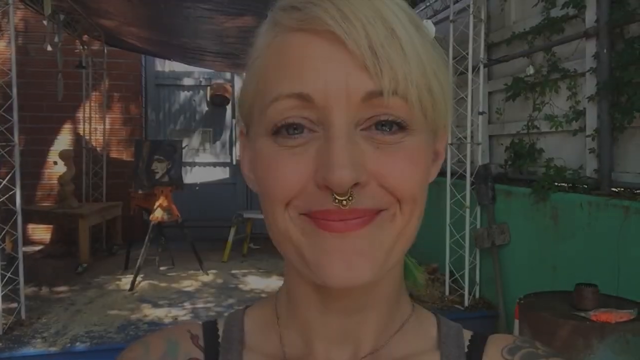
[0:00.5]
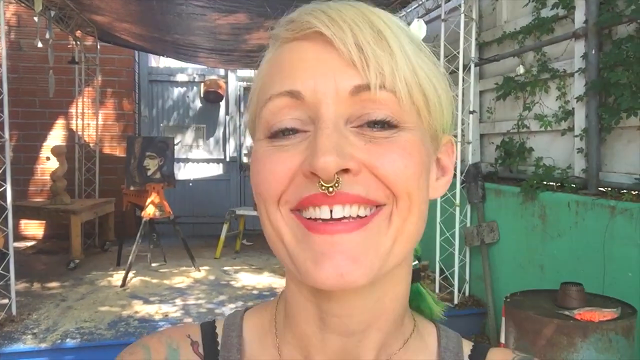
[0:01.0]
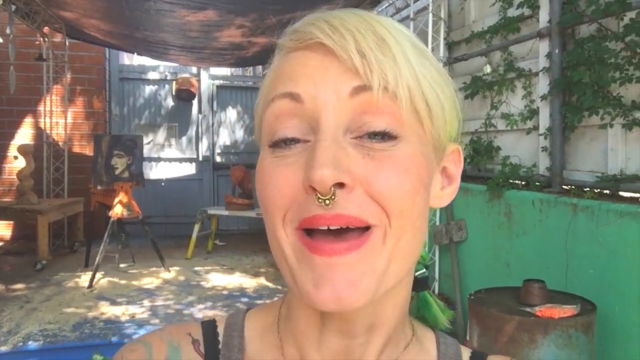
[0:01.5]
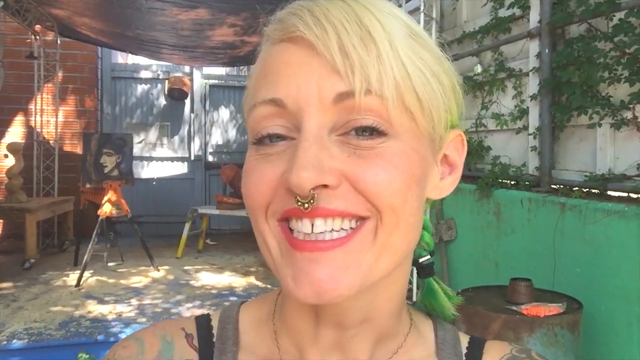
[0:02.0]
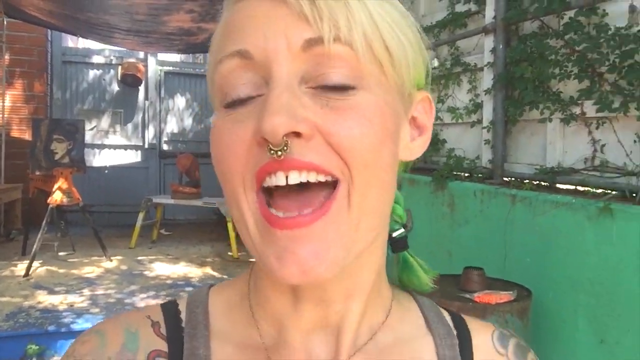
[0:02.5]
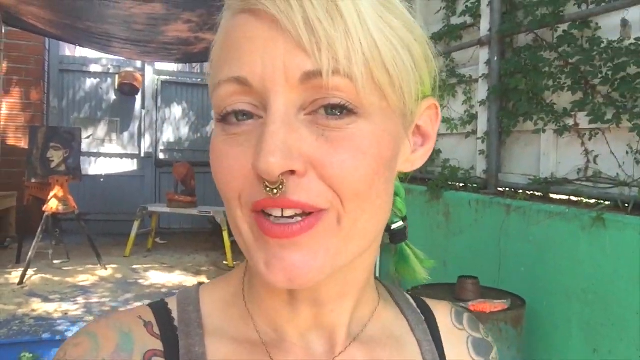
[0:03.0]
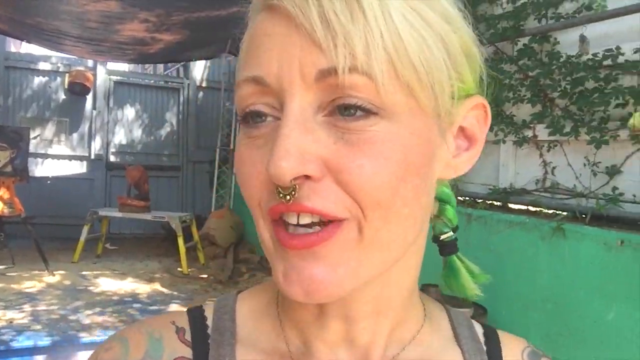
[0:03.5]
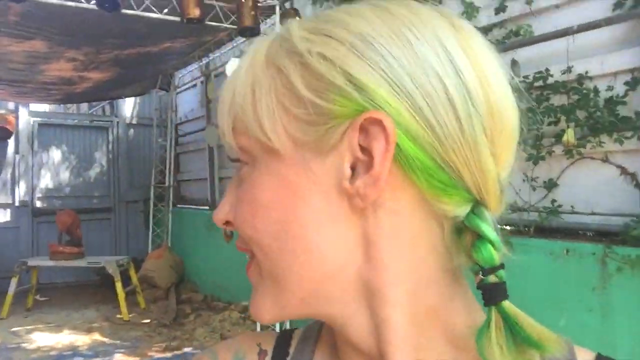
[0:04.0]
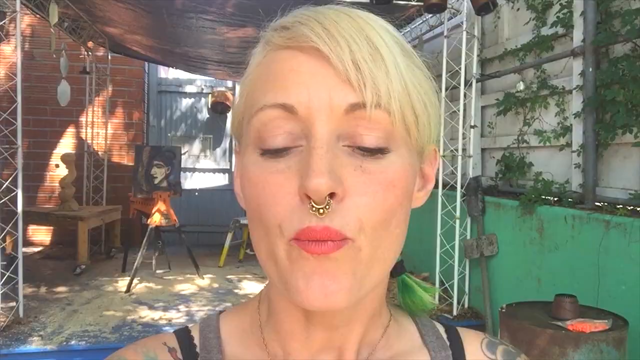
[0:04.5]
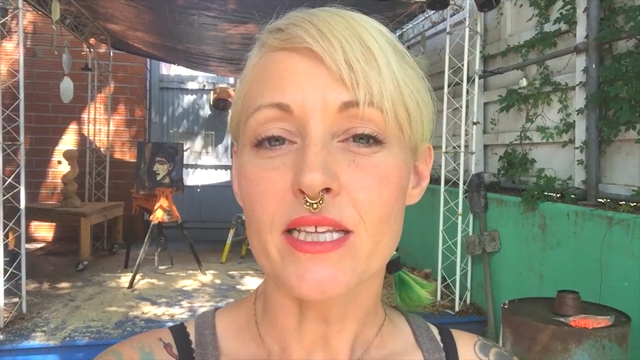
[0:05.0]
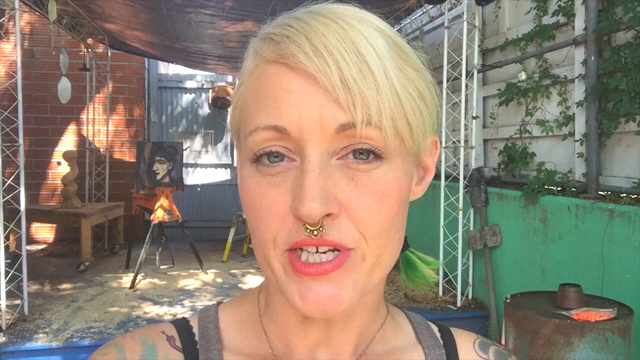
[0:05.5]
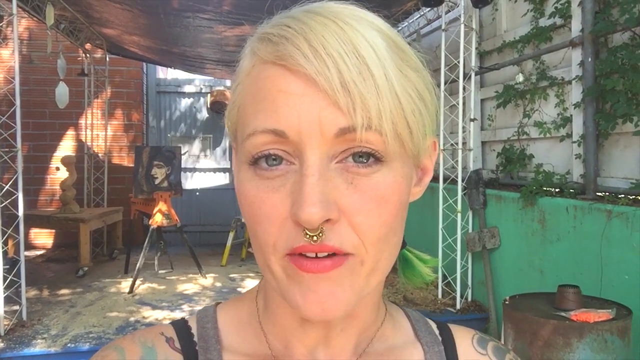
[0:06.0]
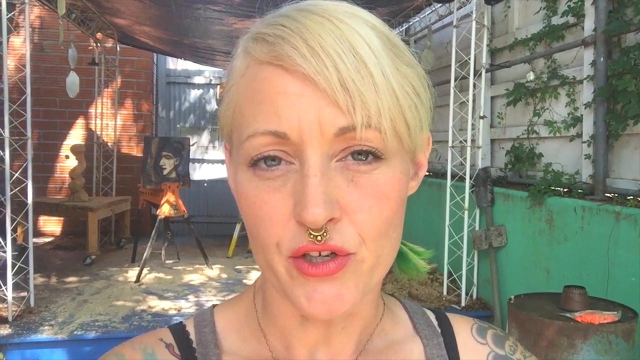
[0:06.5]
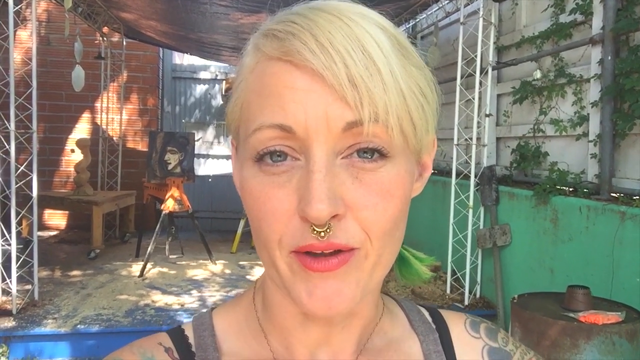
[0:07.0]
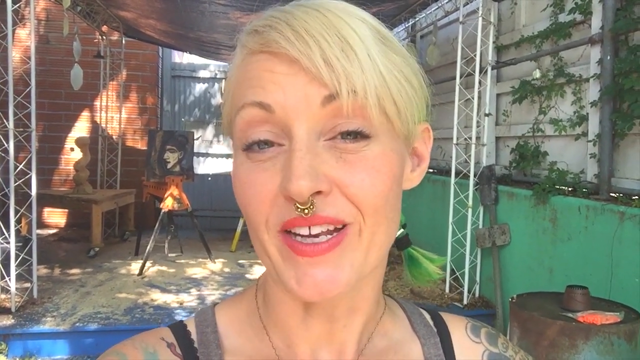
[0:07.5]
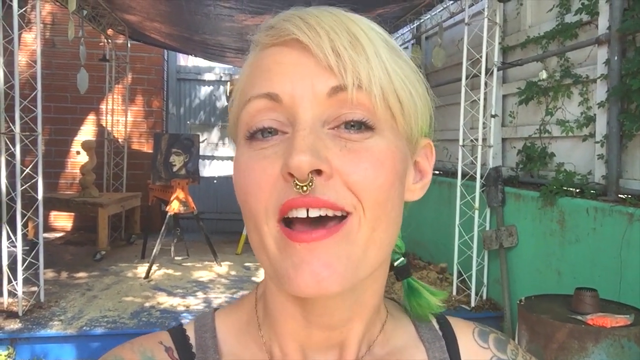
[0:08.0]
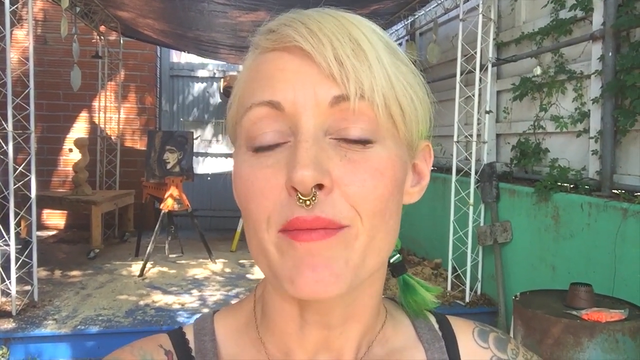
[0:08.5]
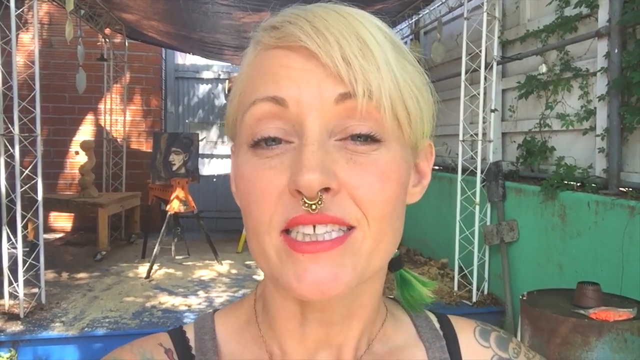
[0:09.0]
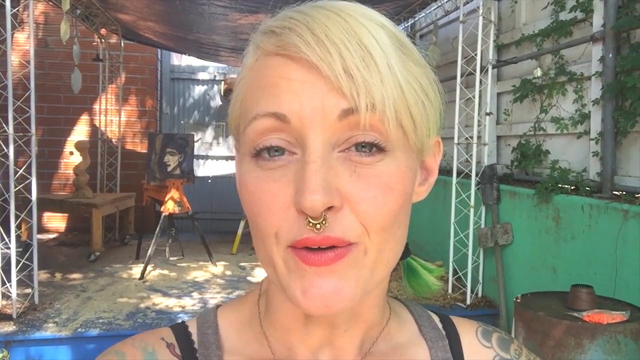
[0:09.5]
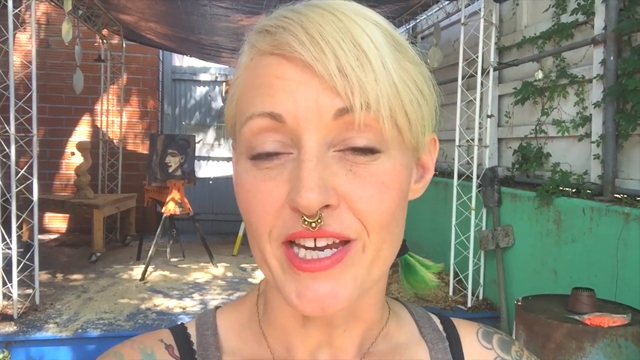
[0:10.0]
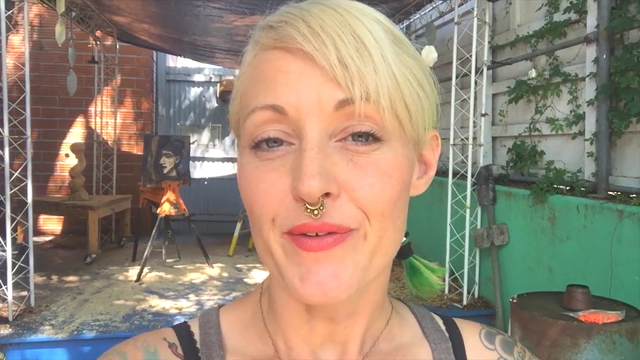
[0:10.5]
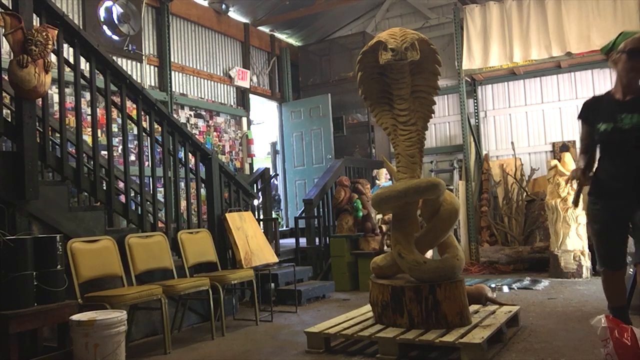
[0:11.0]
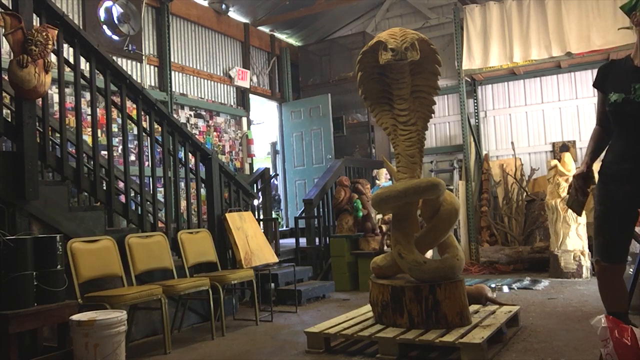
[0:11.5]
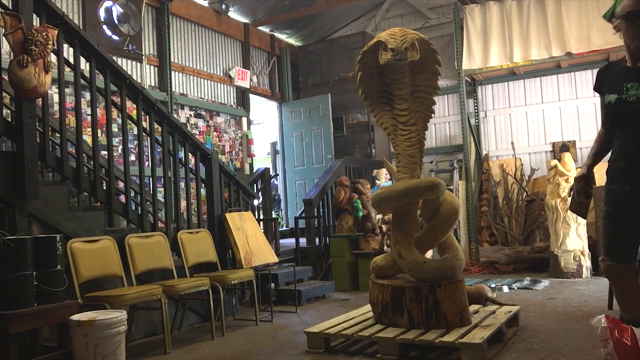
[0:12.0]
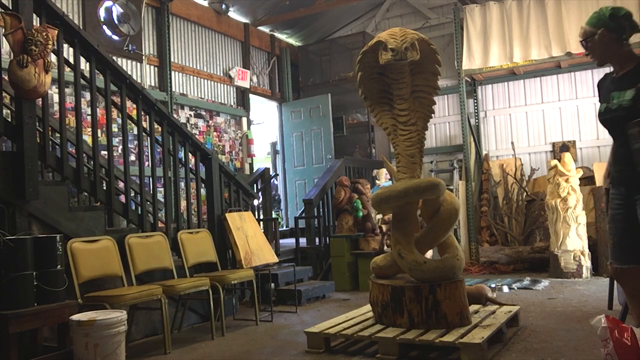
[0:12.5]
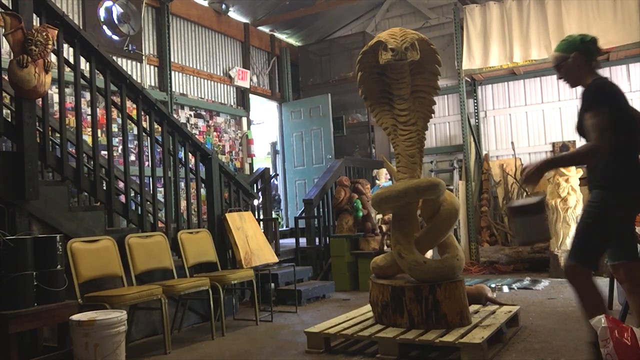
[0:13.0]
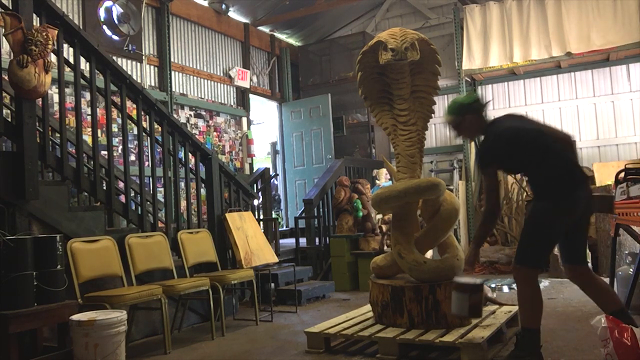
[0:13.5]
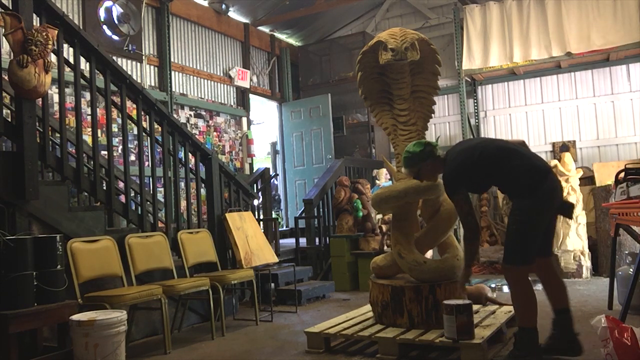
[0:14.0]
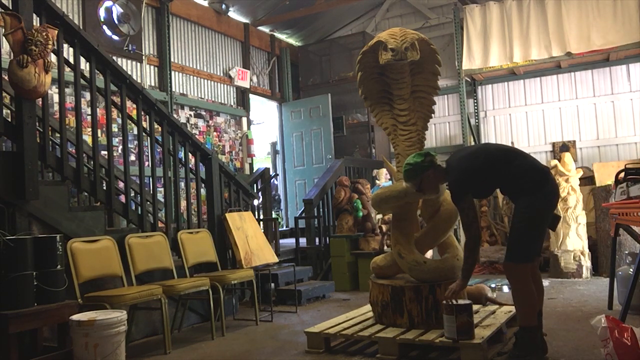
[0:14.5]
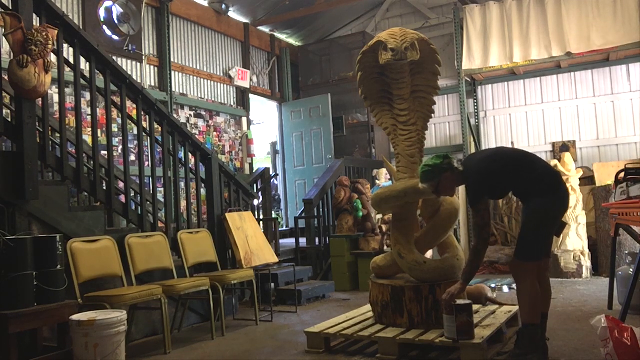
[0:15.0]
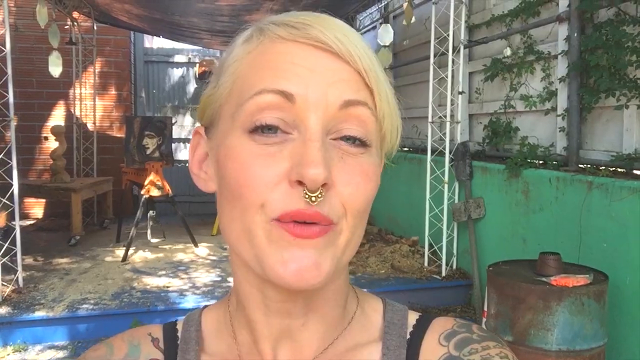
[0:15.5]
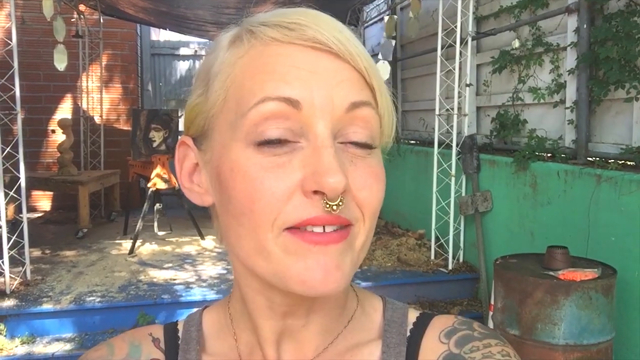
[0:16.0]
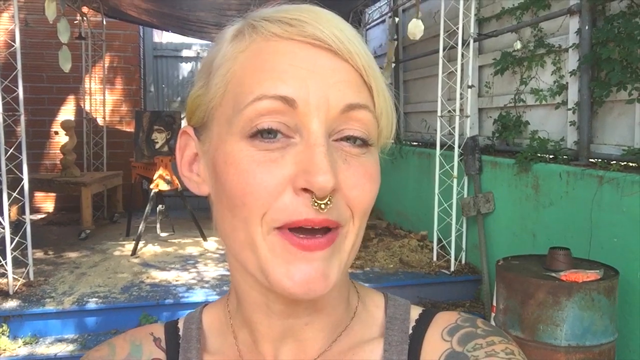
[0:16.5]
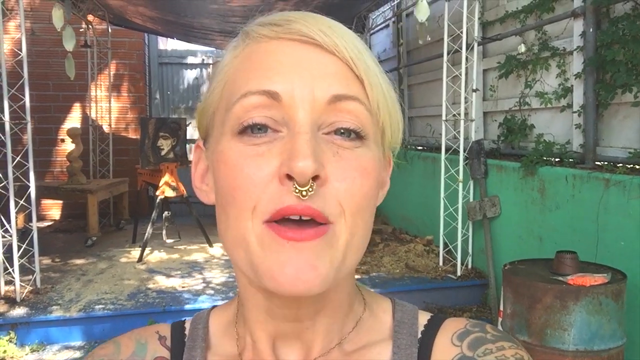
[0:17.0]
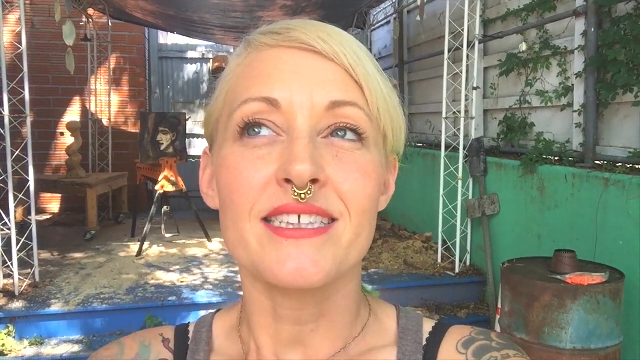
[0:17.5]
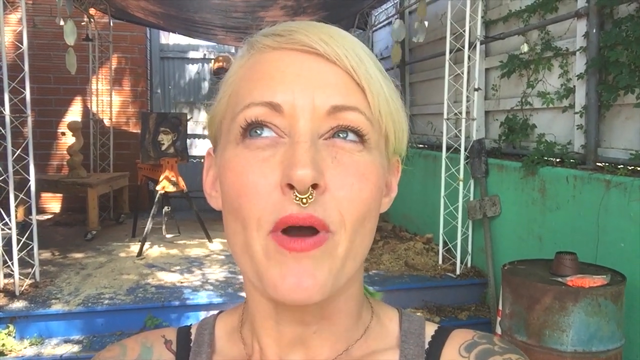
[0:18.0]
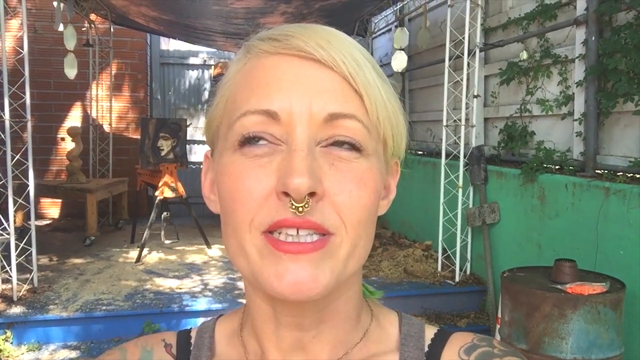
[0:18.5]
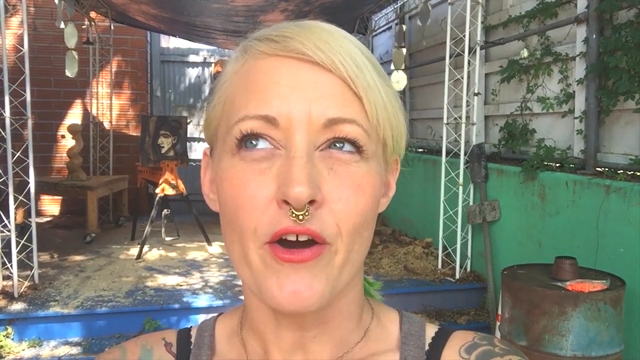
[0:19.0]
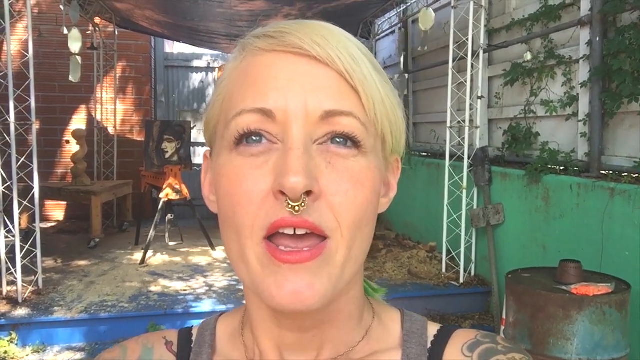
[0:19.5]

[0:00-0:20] A black screen quickly transitions to a woman standing in the middle of the screen, talking to the camera. She wears a gold nose ring and bright red lipstick, she is smiling, and she has a gap in her top front teeth. Her hair is blonde. Behind her is a space that looks like it could be a patio in a garden. To her left there is a painting on an easel, a red brick wall is at the far left of the screen, and there are blue double doors. To her right a white trellis grows vertically up the wall, and a green wall at the bottom has foliage growing up its side. As she turns her head, it becomes clear that her hair is not short but is in a ponytail made into a plait. She moves her head to the left and looks behind her, revealing green dye in the plait. She then turns back to the camera and speaks. The video cuts to a room with a wood carving of a snake in the middle. On the left, a green staircase leads off to the left of the screen, with a wooden gargoyle halfway up it. On the floor below the staircase are three beige chairs. At the base of the staircase a blue door is open, and through the doorway the outside is visible in sunlight. On the right of the room the woman is working on the snake carving, and behind her is a wood carving of a figure wearing a pointed hat. The video cuts back to the woman in the garden. As she talks, her eyes look upwards and then back to the camera, and her head tilts upwards to the left and then back down. She looks upwards as if trying to remember something.